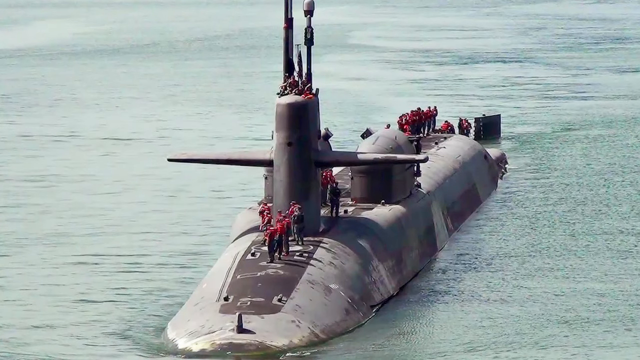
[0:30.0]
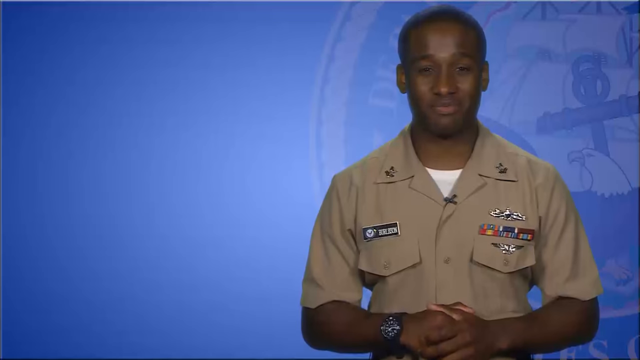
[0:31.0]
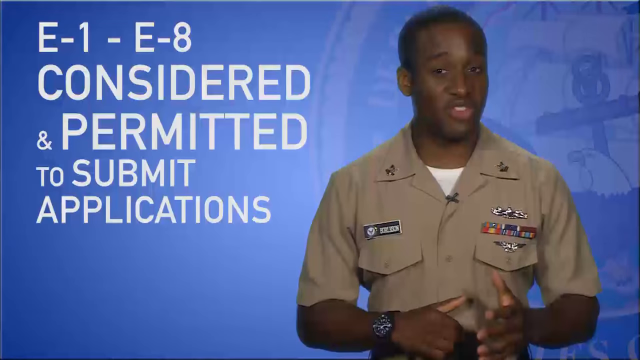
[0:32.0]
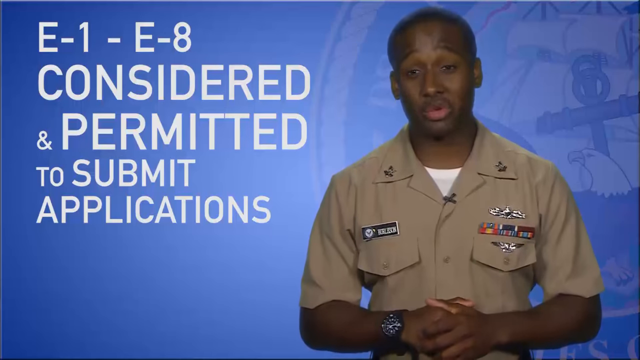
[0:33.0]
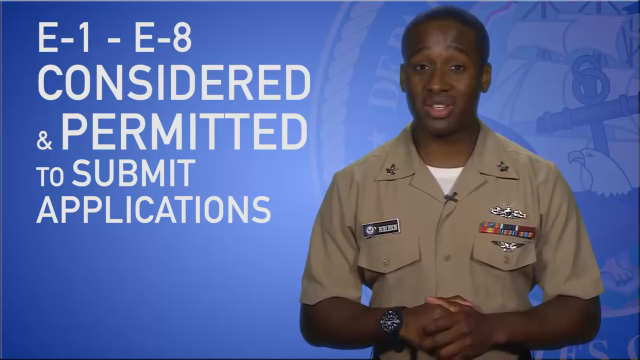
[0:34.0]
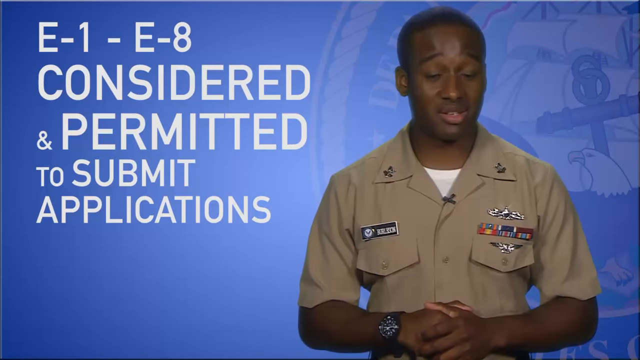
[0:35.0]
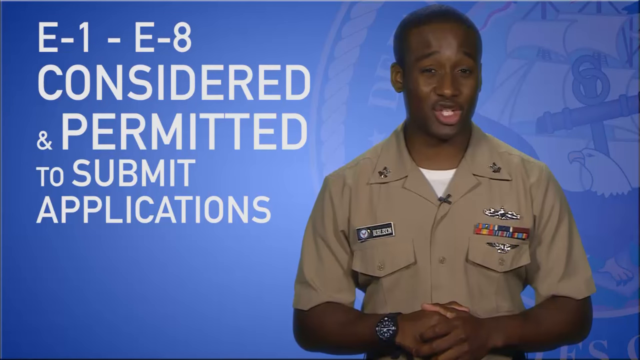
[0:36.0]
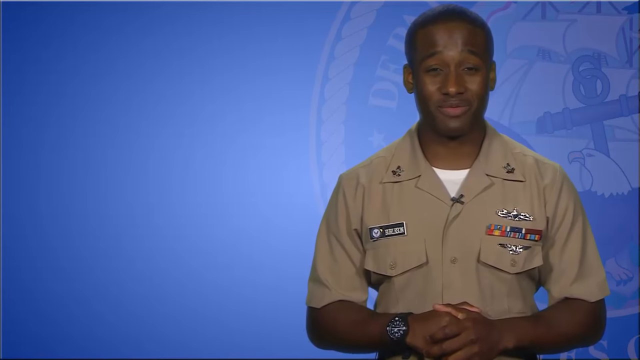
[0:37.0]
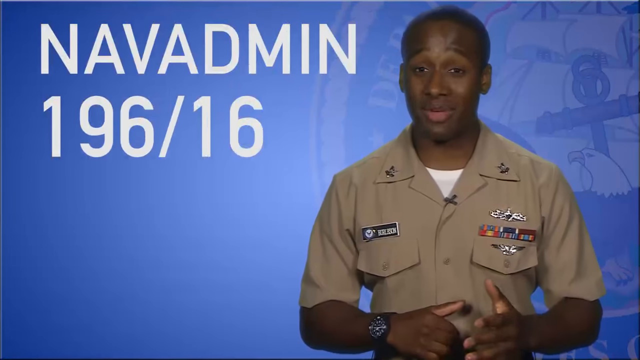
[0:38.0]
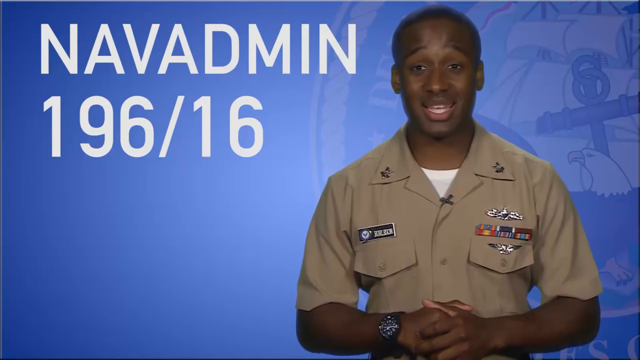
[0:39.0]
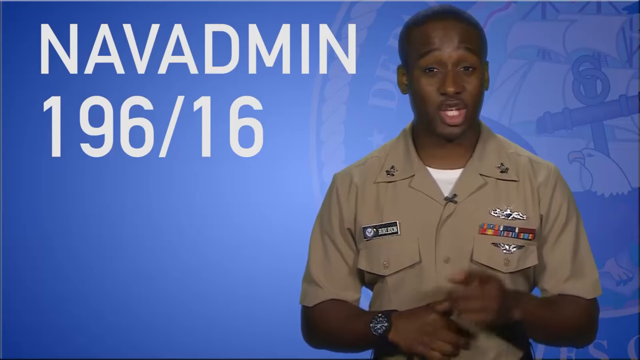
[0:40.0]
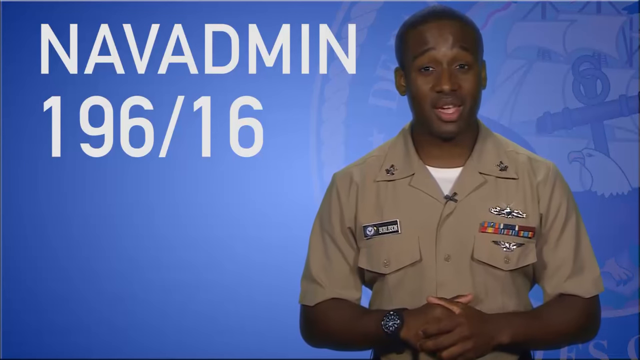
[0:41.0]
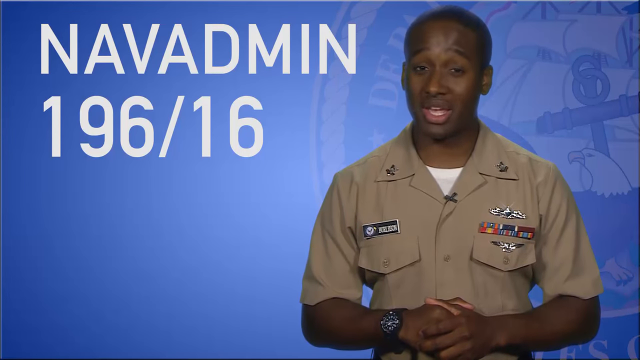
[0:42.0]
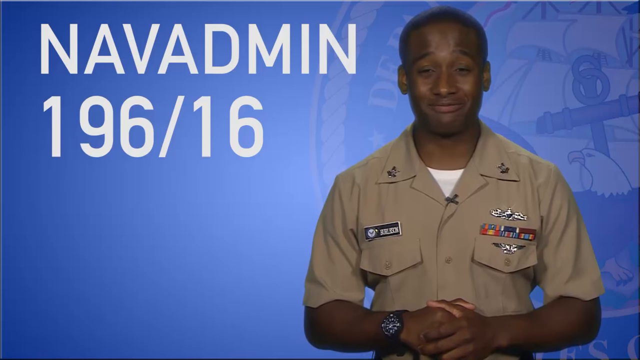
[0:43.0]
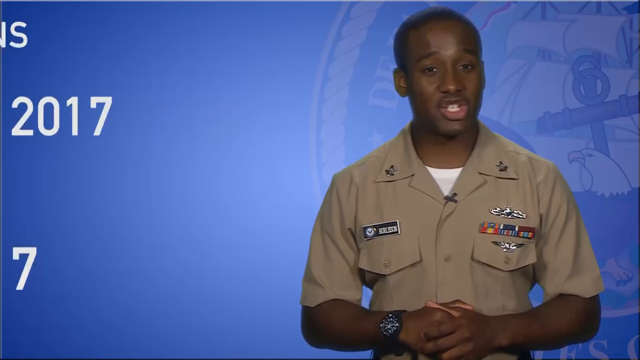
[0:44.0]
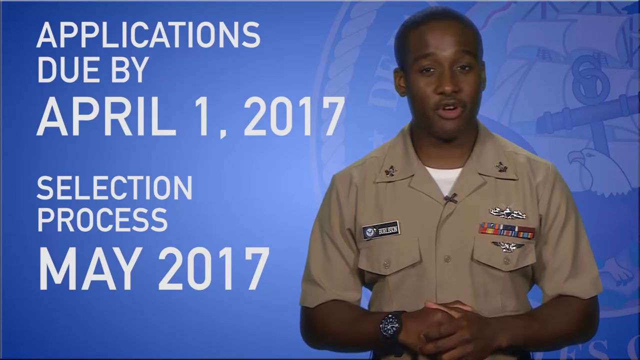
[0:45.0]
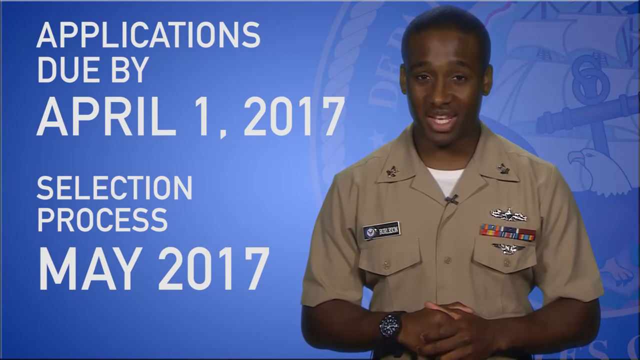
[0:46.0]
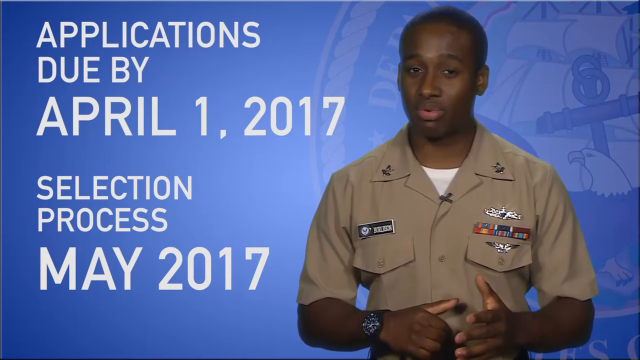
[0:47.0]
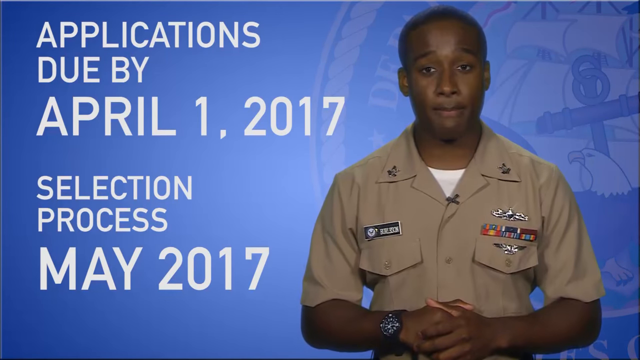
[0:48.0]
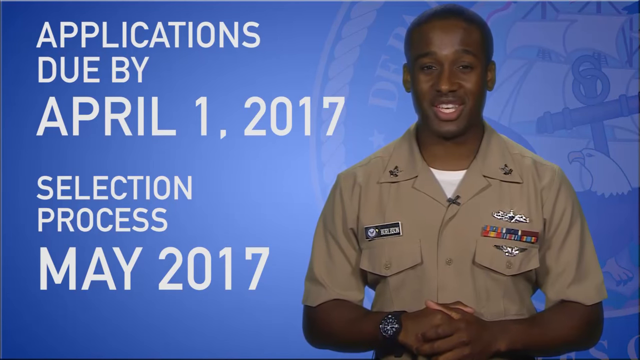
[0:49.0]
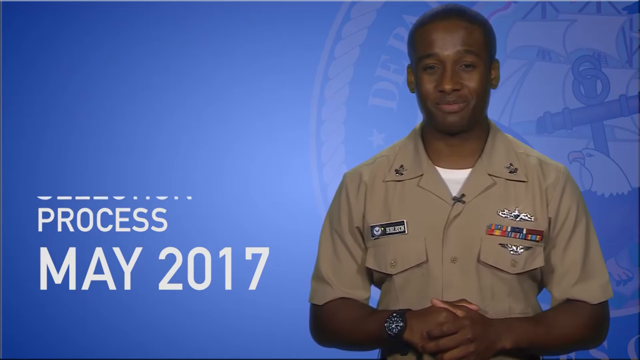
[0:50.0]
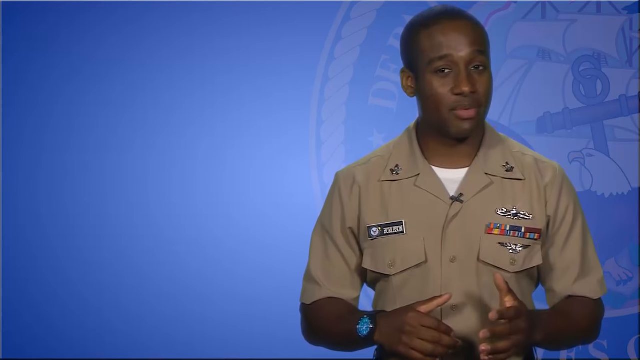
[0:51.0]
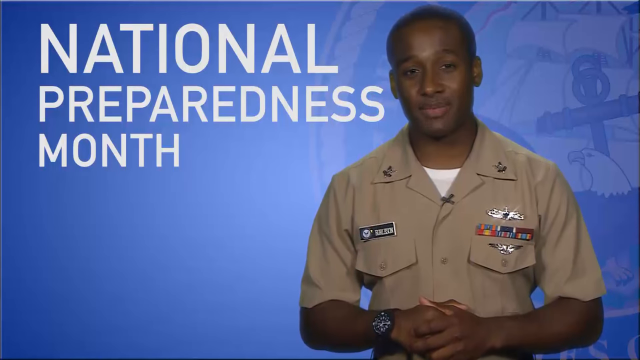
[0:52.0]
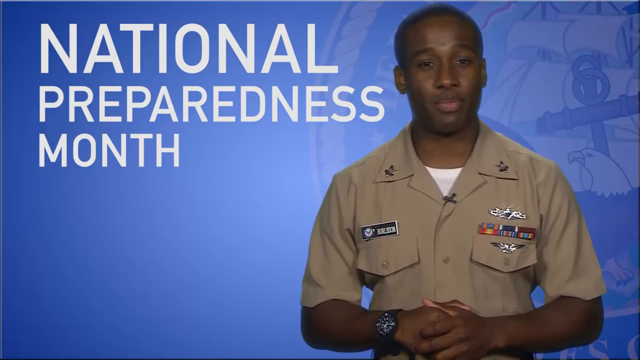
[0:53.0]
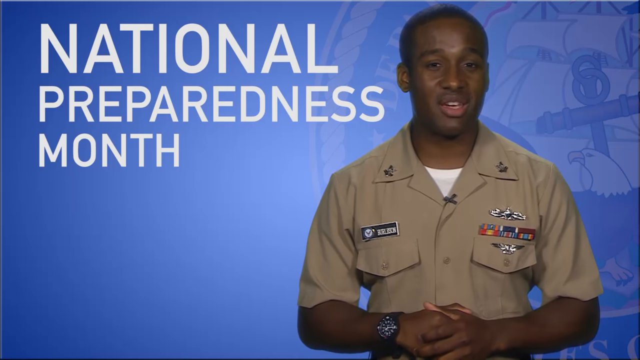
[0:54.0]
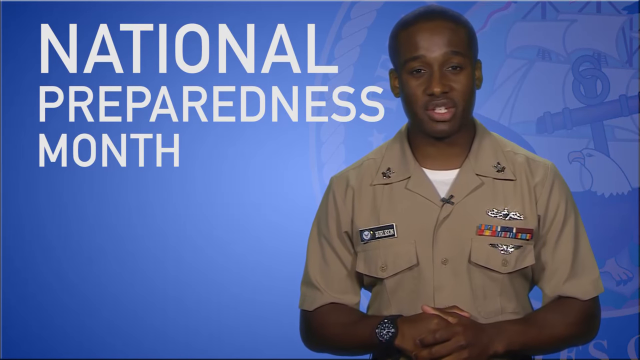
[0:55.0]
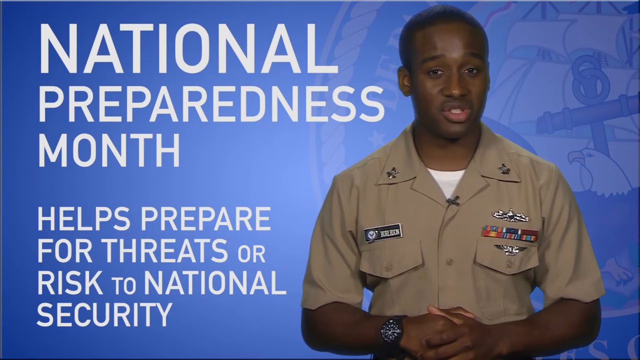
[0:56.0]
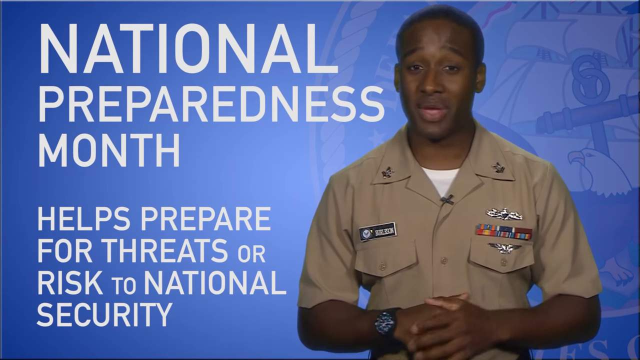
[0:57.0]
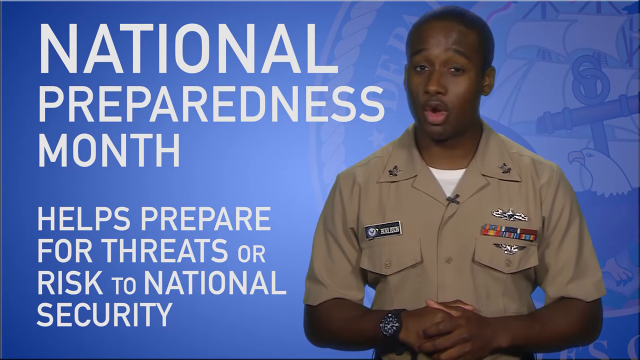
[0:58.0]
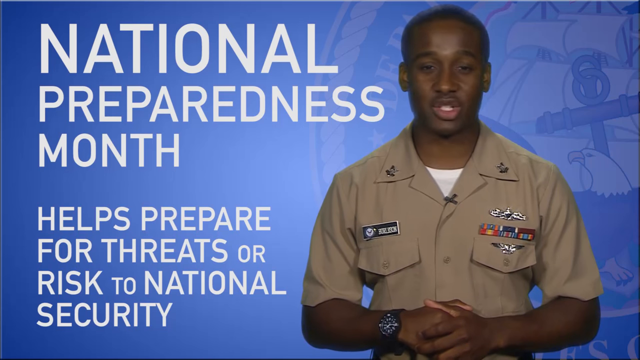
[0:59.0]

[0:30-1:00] Apparently an ad related to the Navy, the video shows a sailor in his uniform on the right side of the screen against a blue background. Text appears on the left side as he speaks. It first reads "E1 through E8, considered and permitted to submit applications," then "NAVAD MIN 196 over 16," then "applications due by April 1, 2017" and "the selection process is May 2017." Next the text reads "National Preparedness Month" and "helps prepare for threats or risk to national security." The sailor talks continuously while the text appears. Aside from the blue, the background holds a very light outline of a logo that looks like that of the Navy or the Department of Defense.